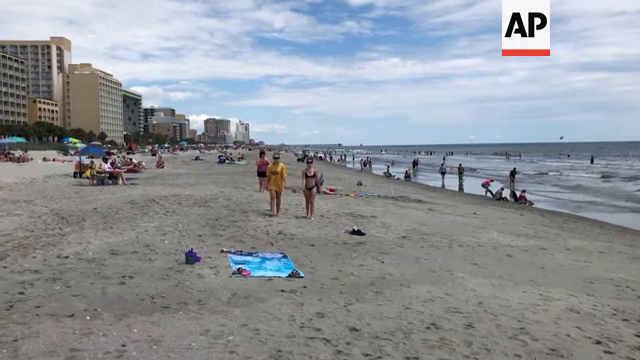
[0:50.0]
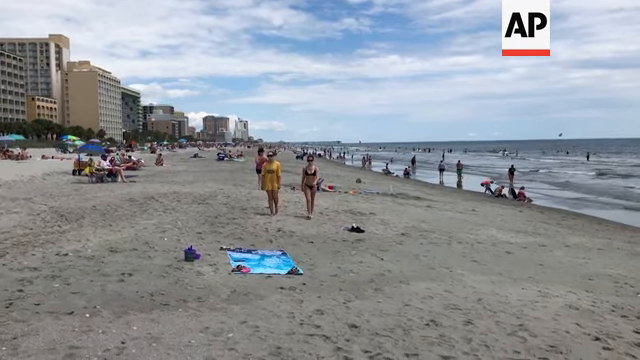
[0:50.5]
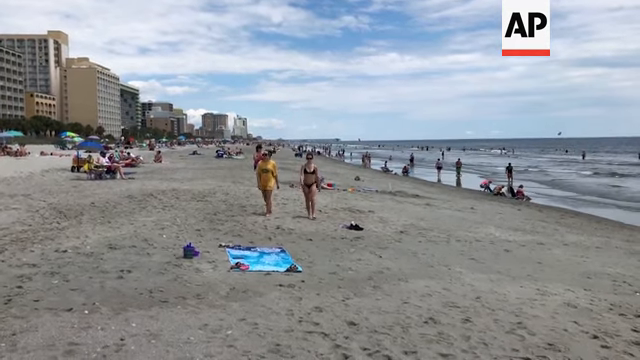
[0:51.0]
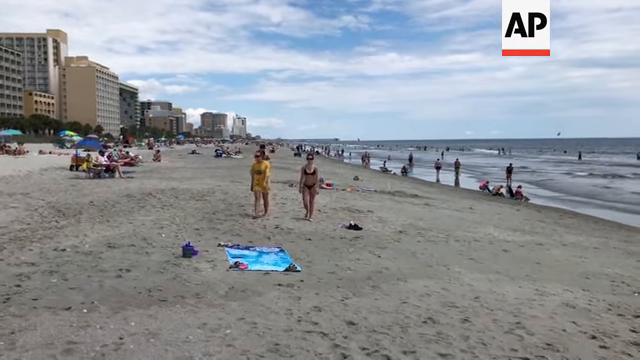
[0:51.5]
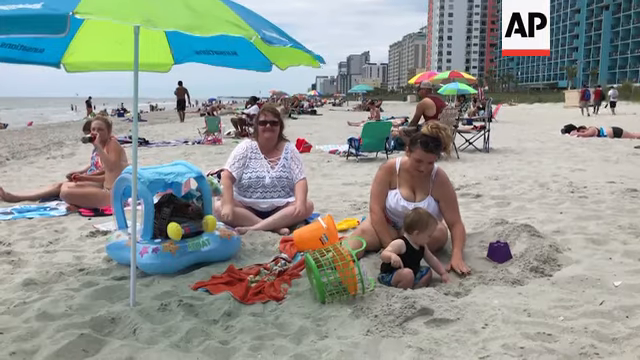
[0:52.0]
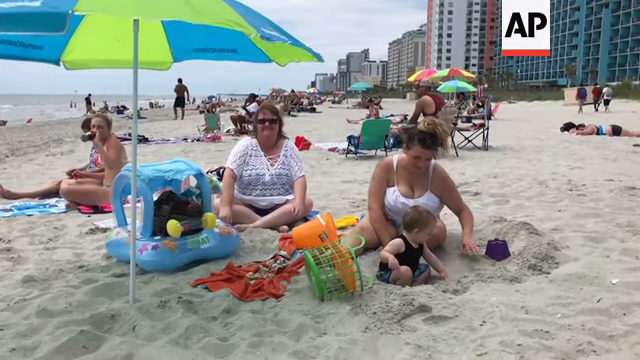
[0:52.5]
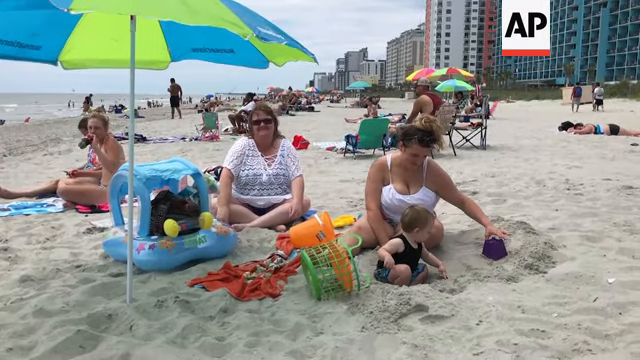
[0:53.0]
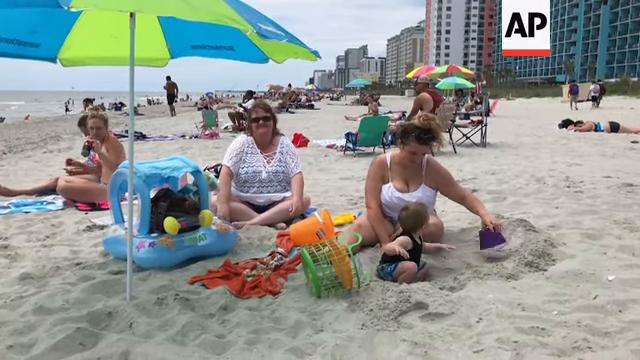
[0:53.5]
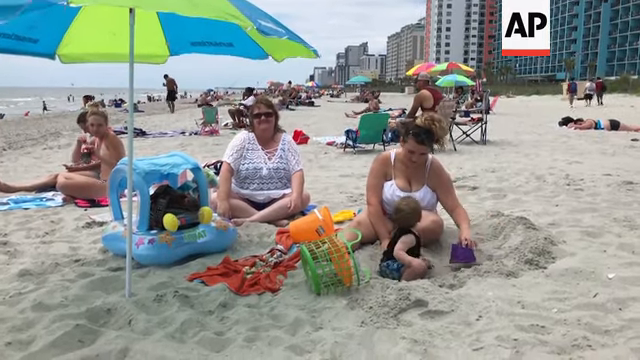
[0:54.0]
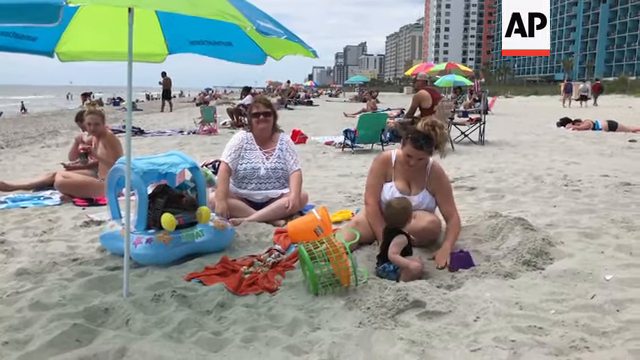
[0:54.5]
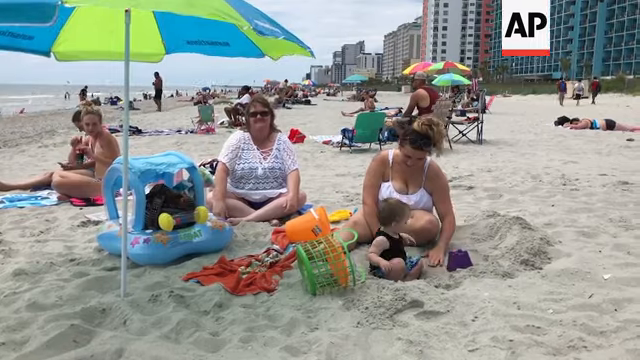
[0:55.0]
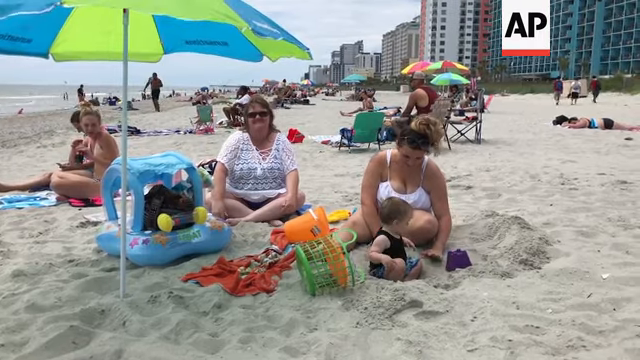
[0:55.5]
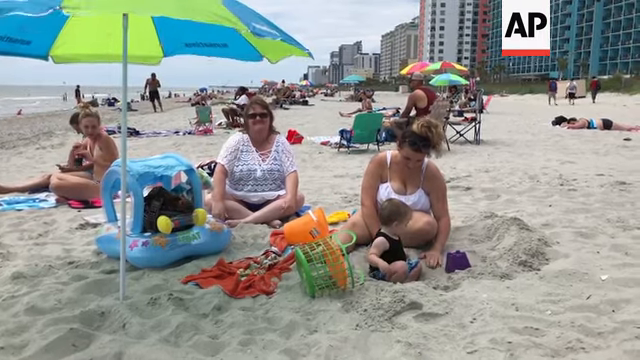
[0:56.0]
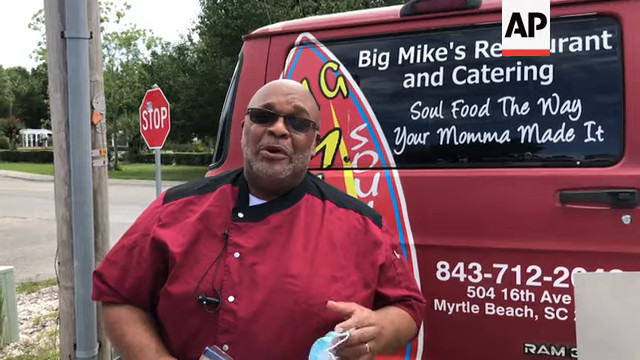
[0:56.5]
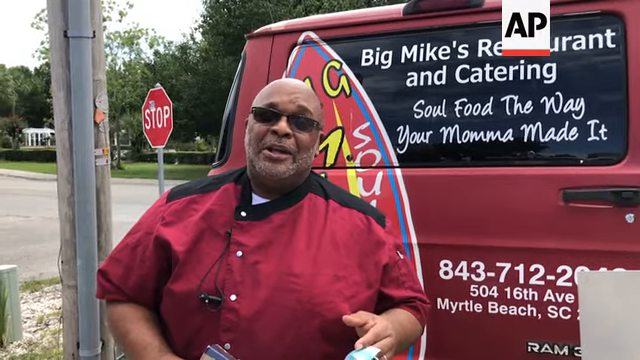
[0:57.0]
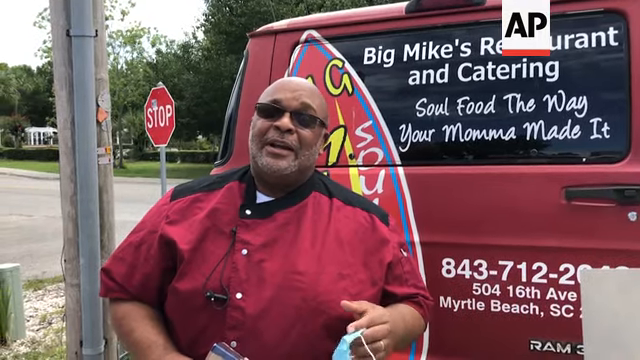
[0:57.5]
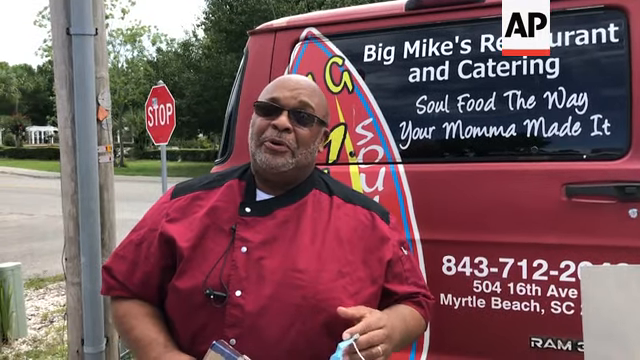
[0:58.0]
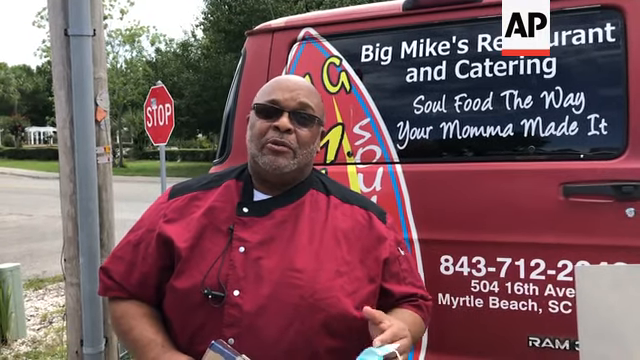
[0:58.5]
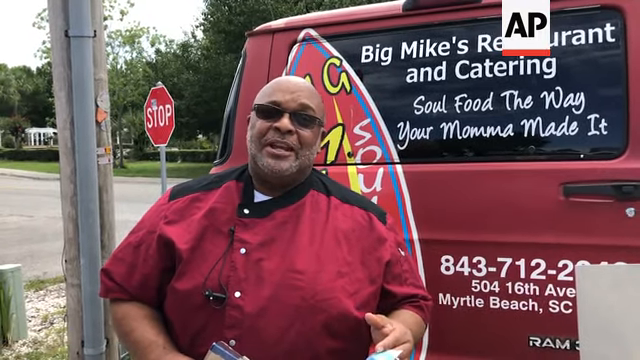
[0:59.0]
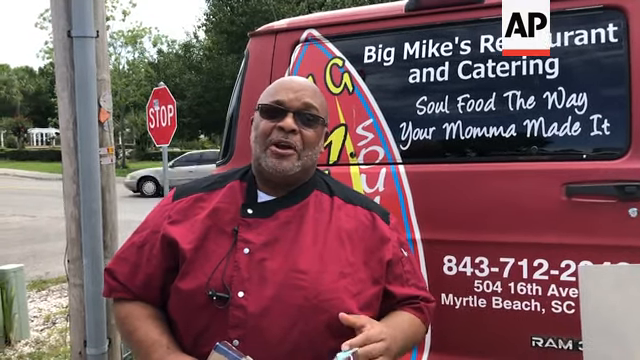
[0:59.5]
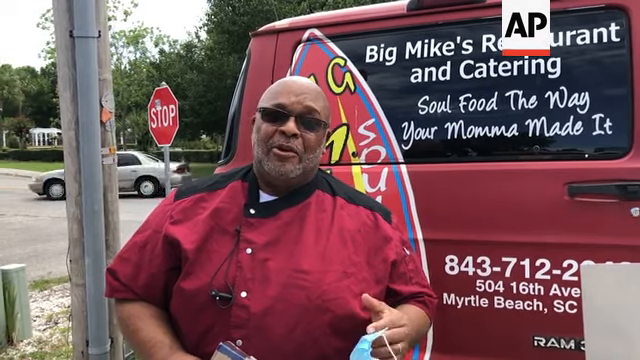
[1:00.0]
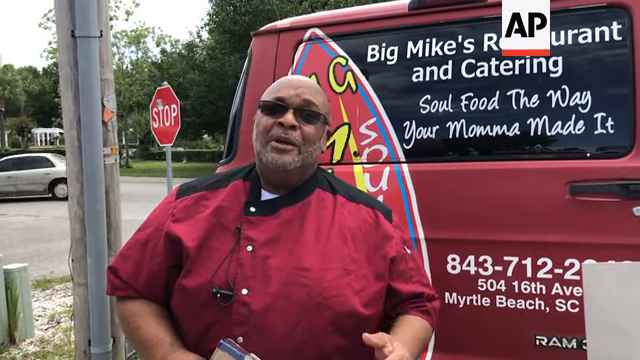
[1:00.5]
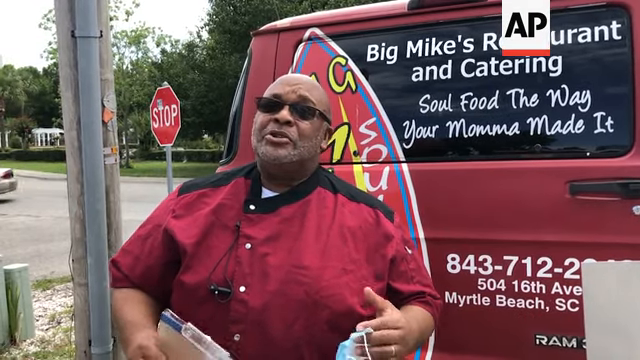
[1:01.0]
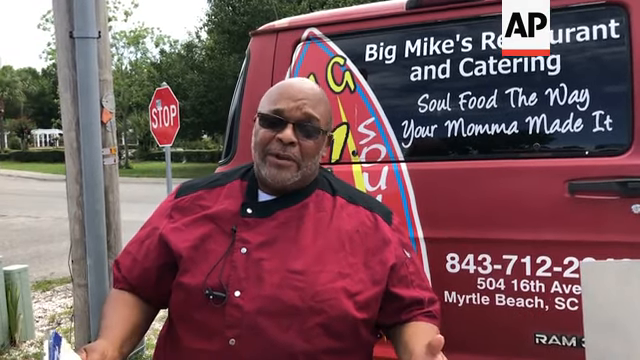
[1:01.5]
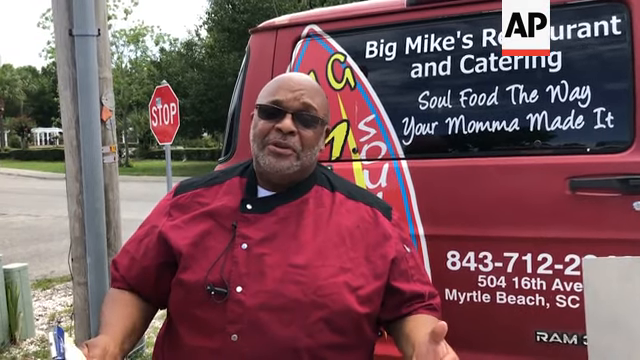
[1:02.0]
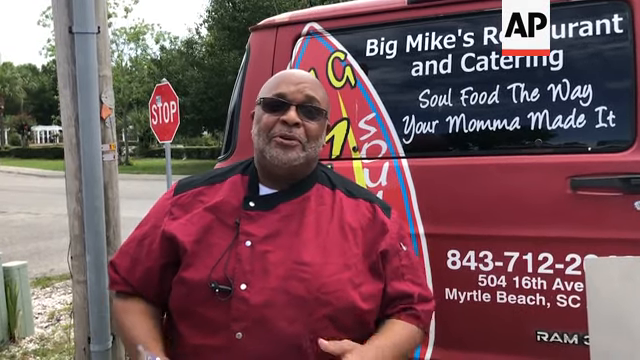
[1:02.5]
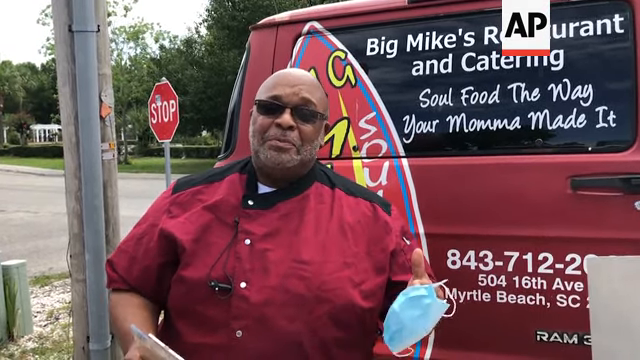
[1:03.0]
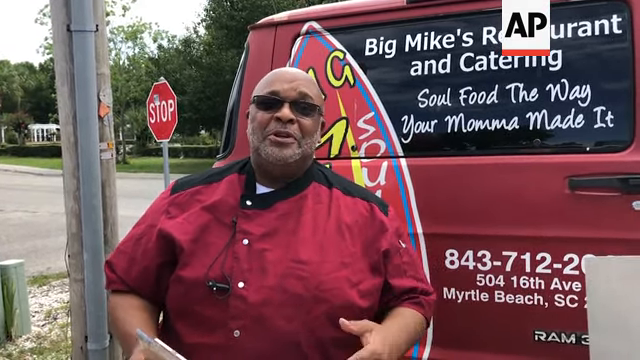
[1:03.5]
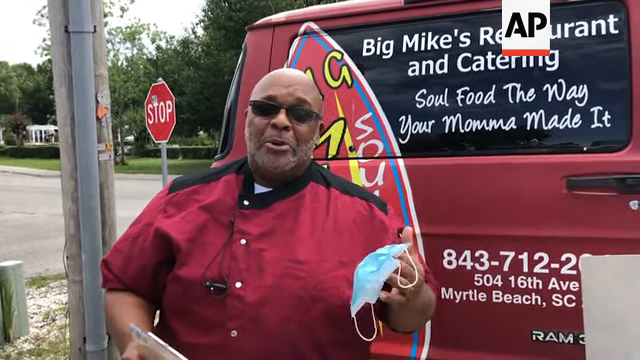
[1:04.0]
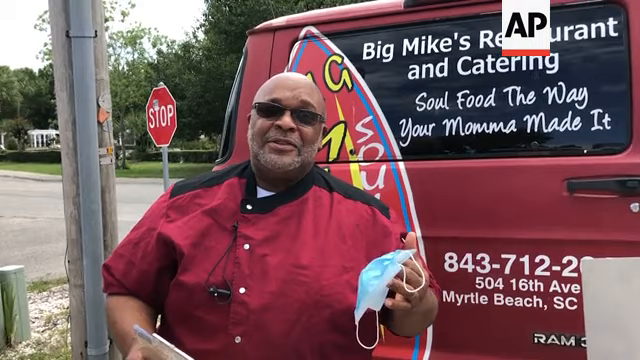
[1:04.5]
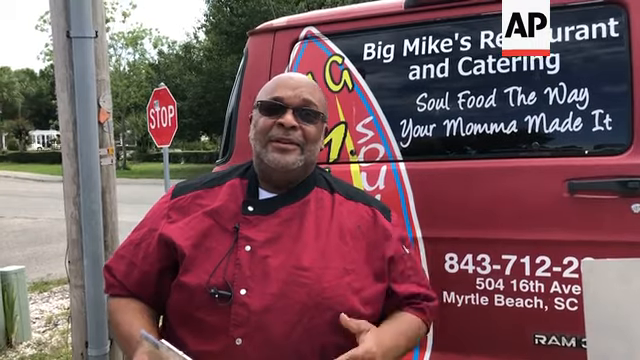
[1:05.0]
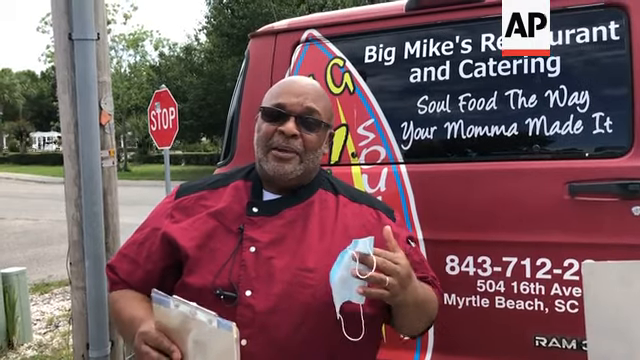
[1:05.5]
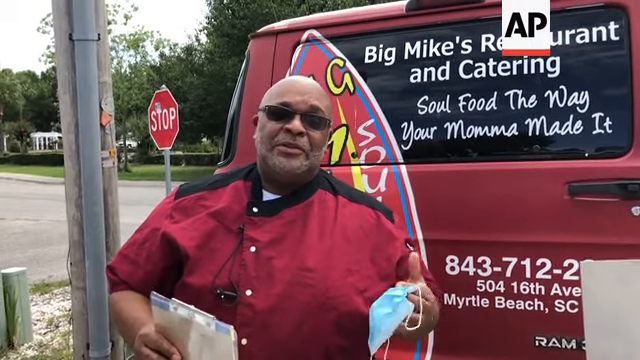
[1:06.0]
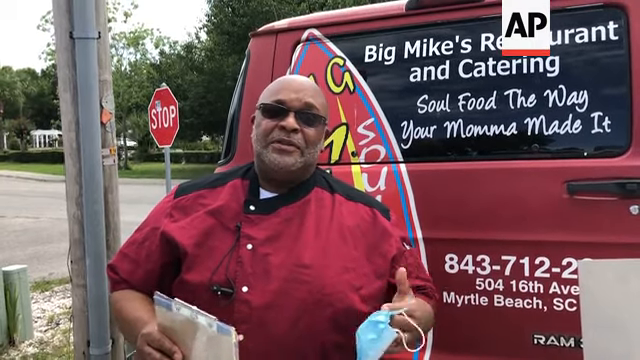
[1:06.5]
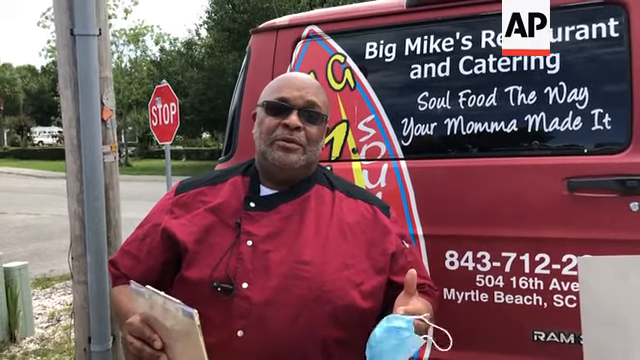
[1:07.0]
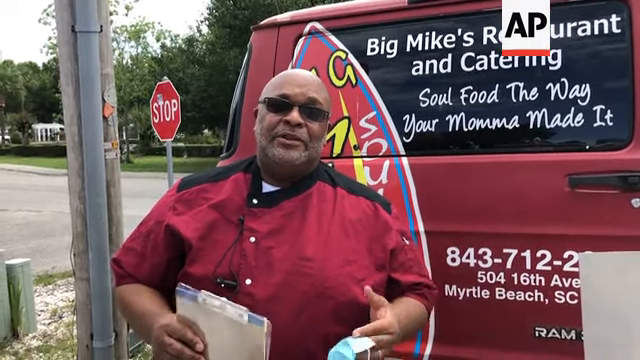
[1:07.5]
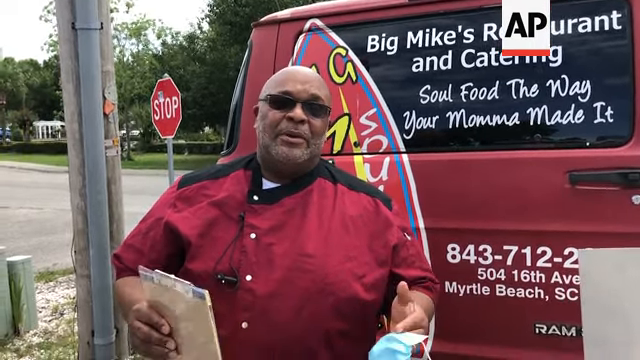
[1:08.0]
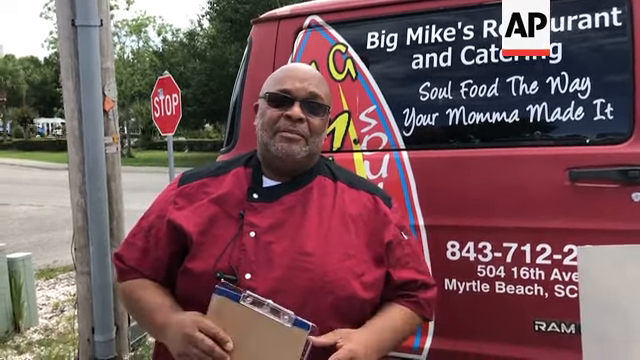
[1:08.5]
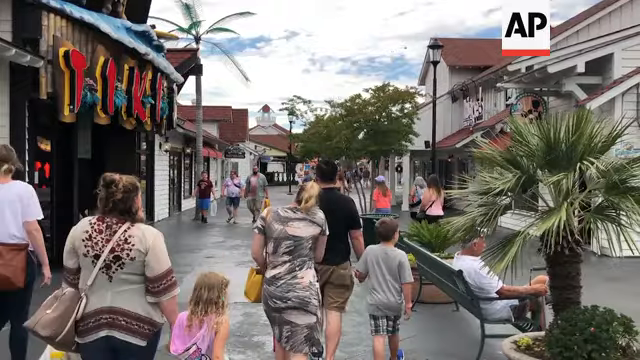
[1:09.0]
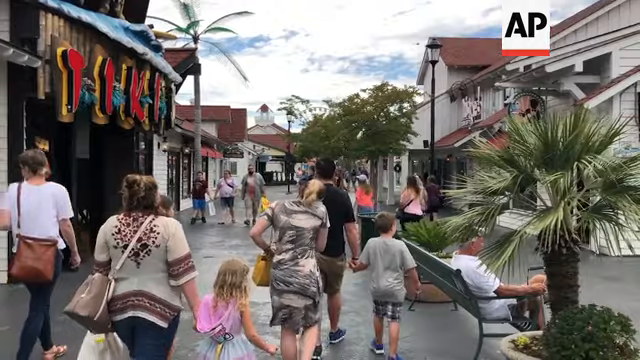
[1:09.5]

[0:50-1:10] Individuals walk on the beach wearing bathing suits and bikinis. The scene switches to a family playing in the sand, with a young toddler lying in the sand playing around and his mother next to him. Several other women are in the area with an umbrella above them for shade. It then switches to a darker-skinned man talking in front of a van, apparently about the masks that had to be worn during COVID. In the background, cars drive by, and there is a stop sign and an electrical pole. Next, people walk by a tiki shop. The video briefly cuts back to the women walking in their bikinis and bathing suits on the beach.